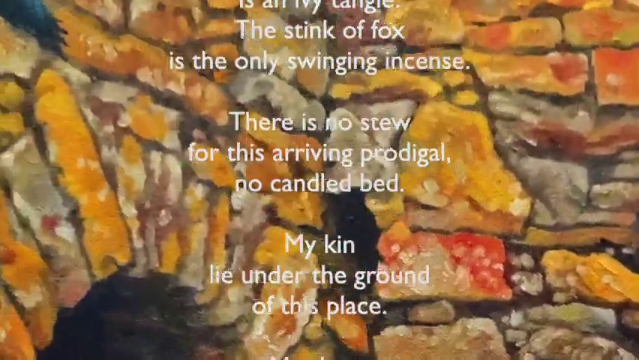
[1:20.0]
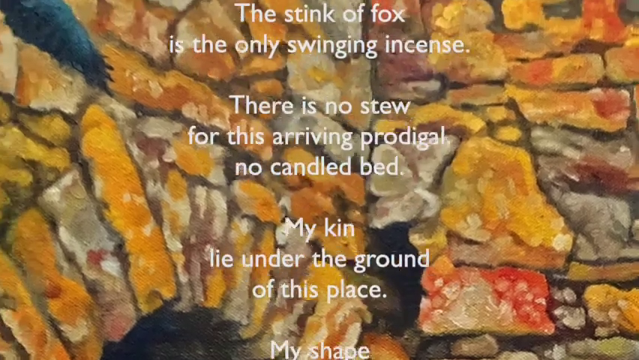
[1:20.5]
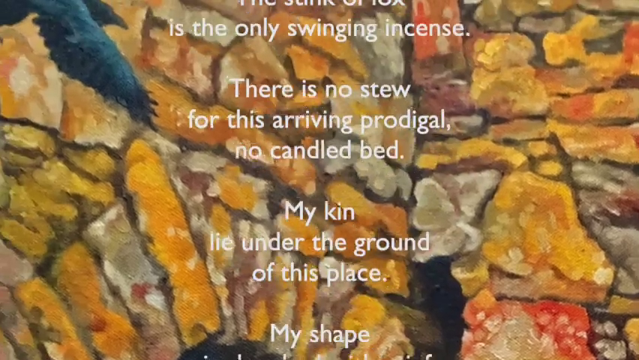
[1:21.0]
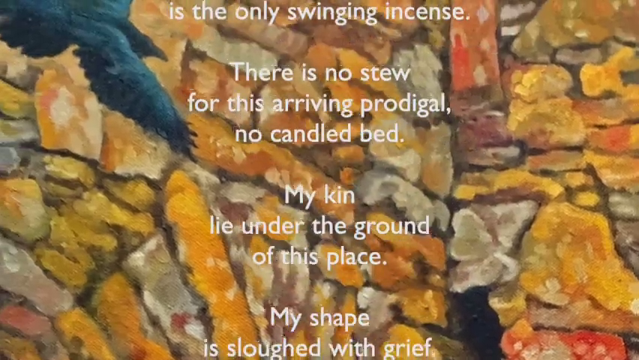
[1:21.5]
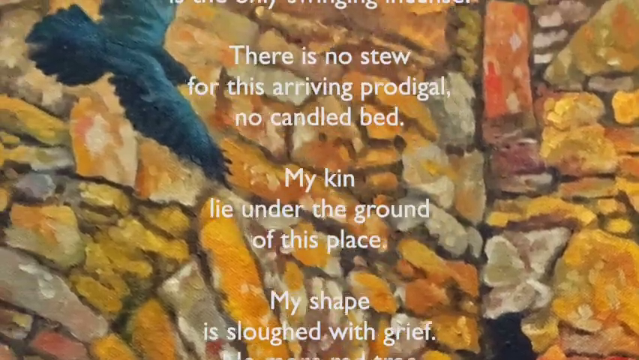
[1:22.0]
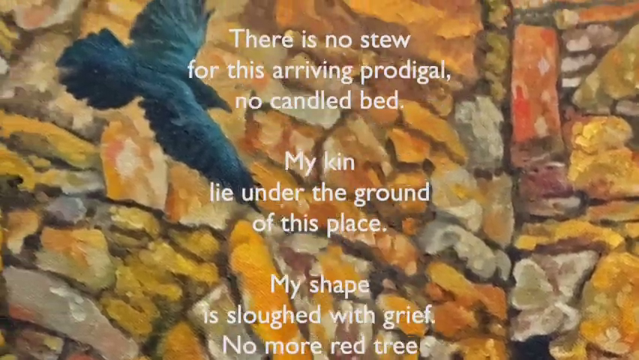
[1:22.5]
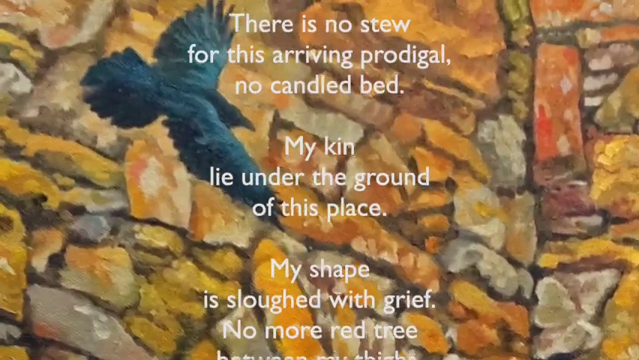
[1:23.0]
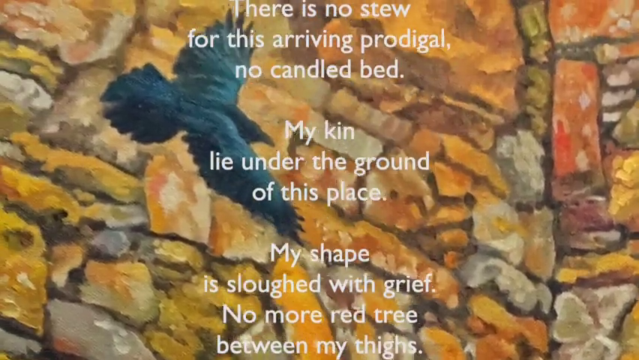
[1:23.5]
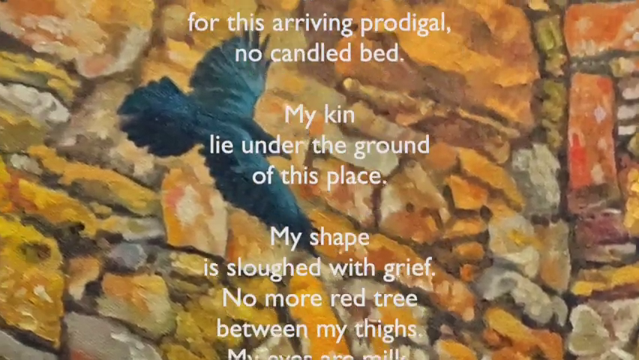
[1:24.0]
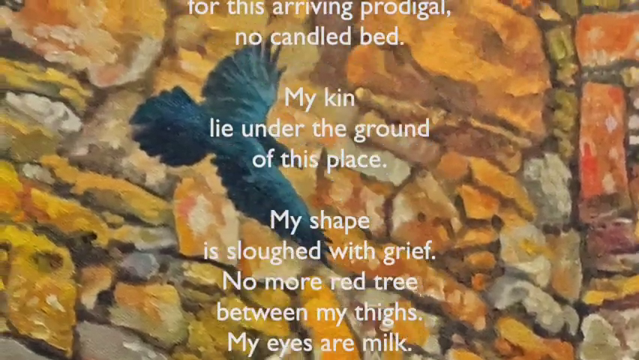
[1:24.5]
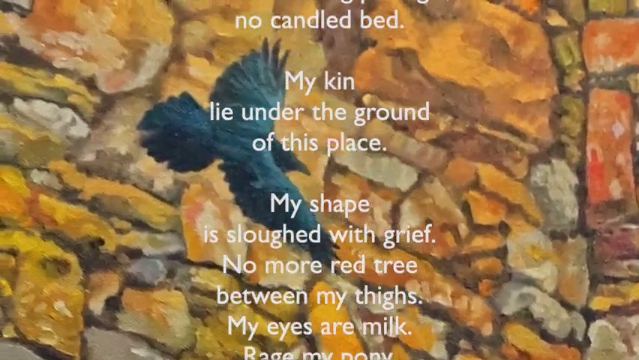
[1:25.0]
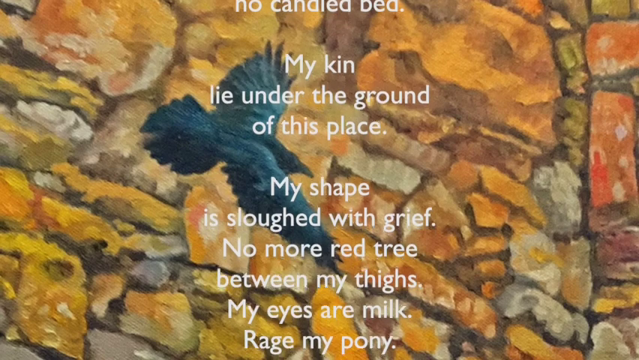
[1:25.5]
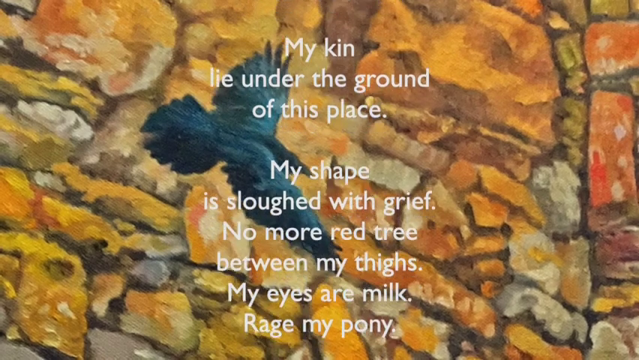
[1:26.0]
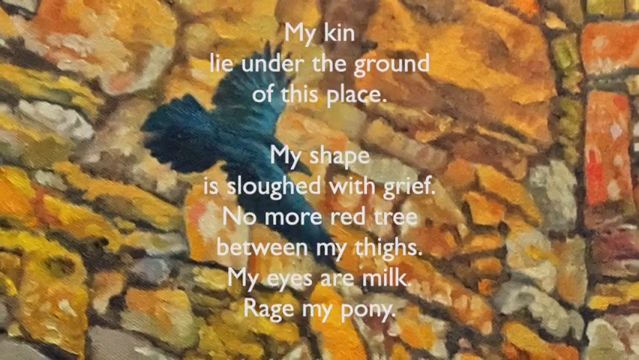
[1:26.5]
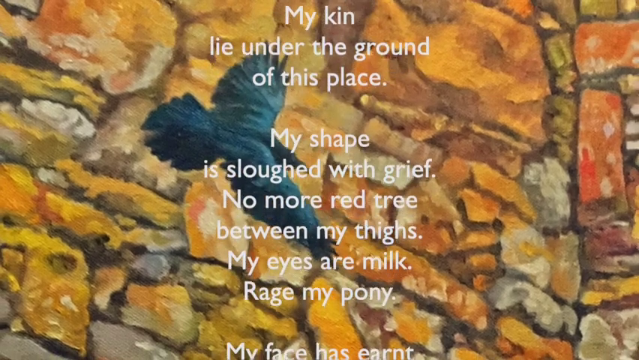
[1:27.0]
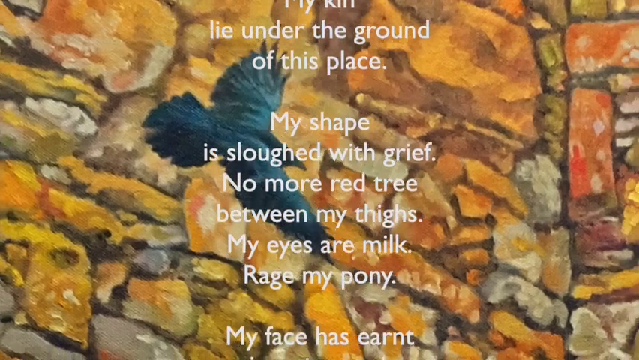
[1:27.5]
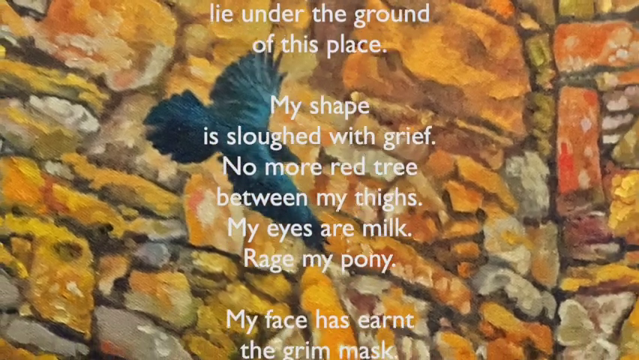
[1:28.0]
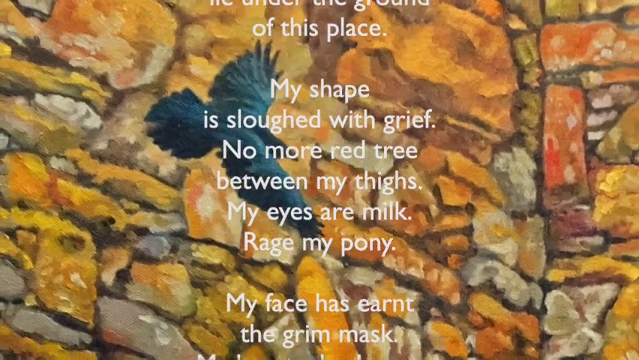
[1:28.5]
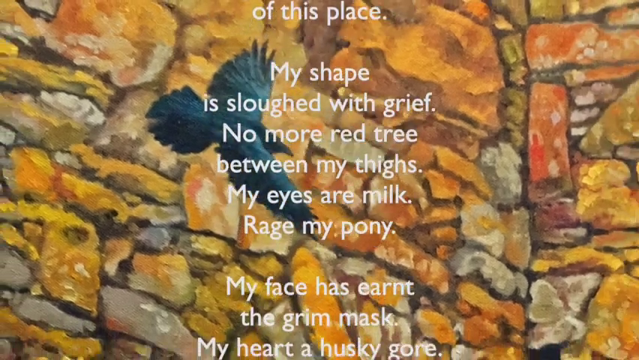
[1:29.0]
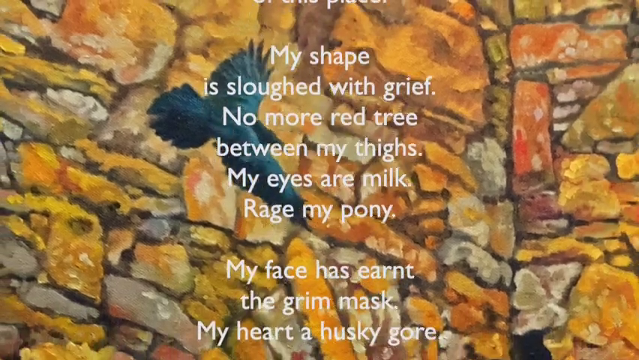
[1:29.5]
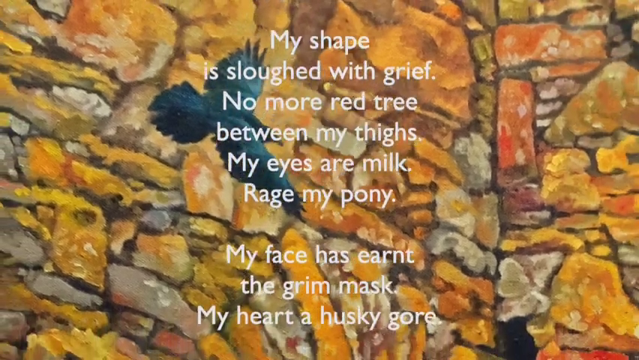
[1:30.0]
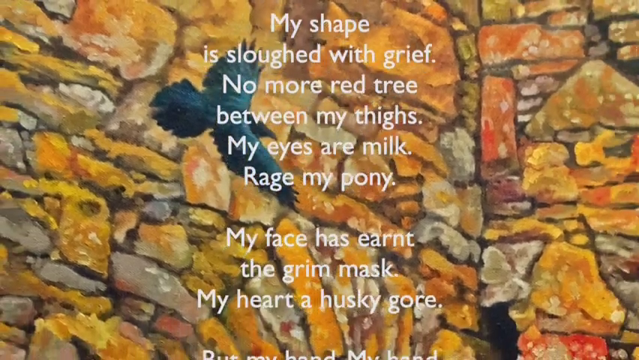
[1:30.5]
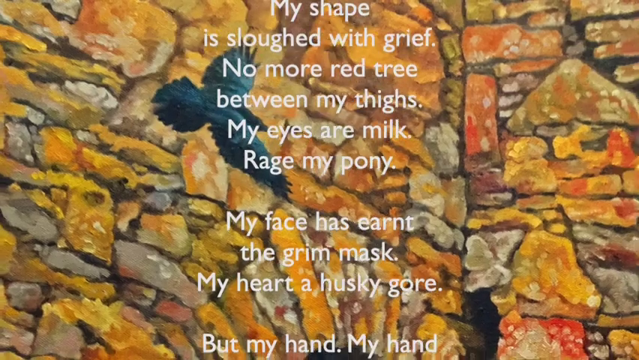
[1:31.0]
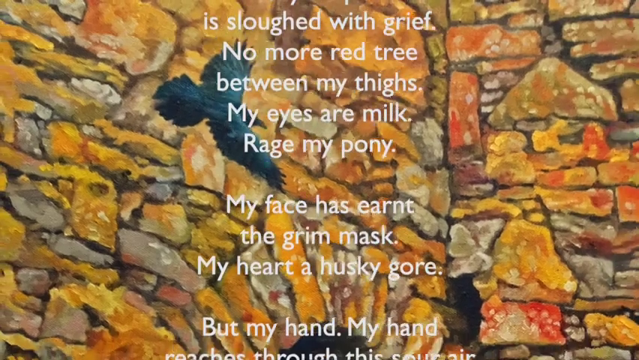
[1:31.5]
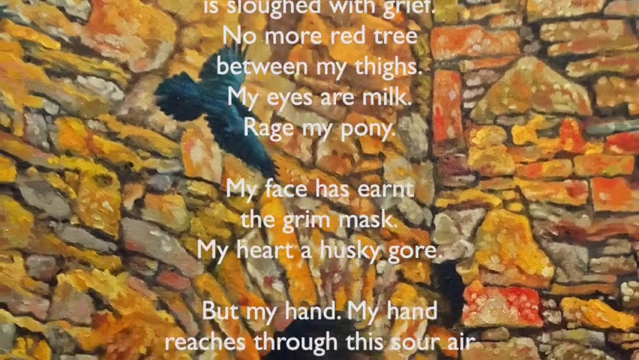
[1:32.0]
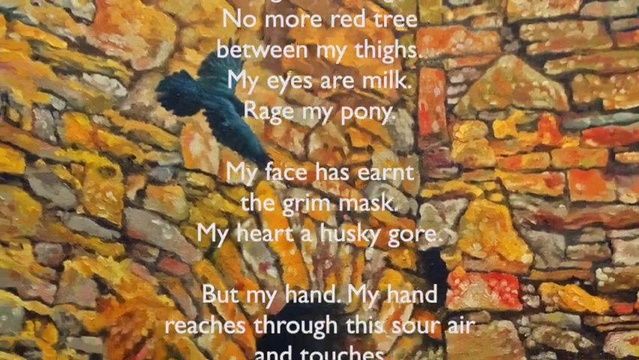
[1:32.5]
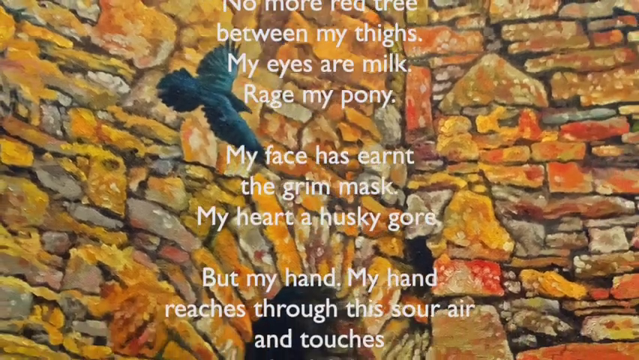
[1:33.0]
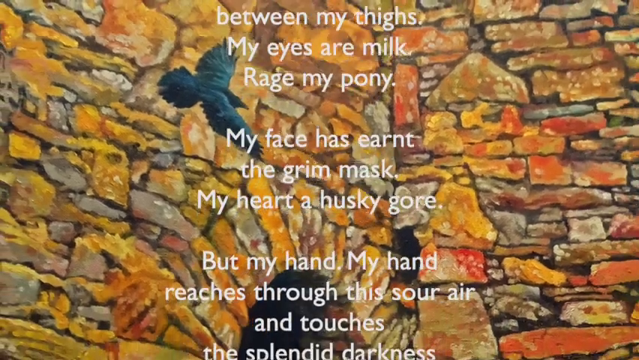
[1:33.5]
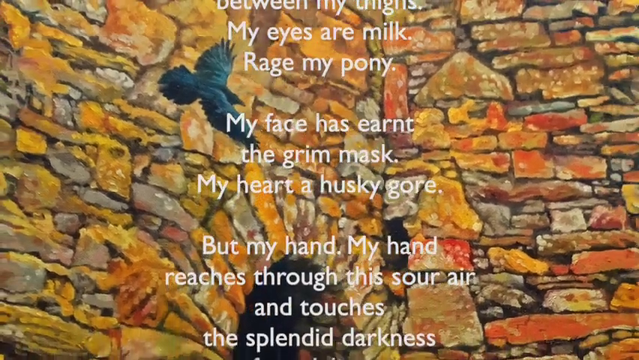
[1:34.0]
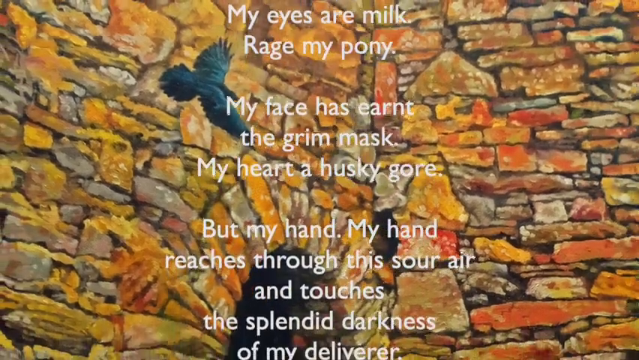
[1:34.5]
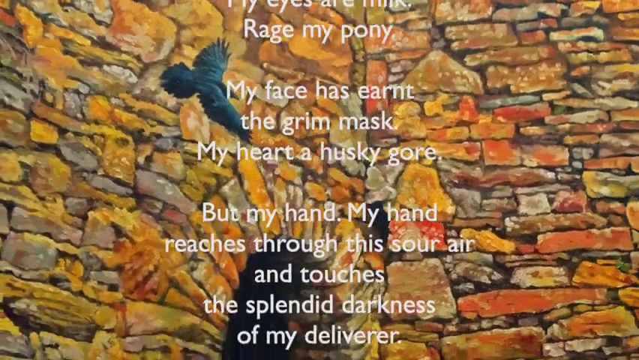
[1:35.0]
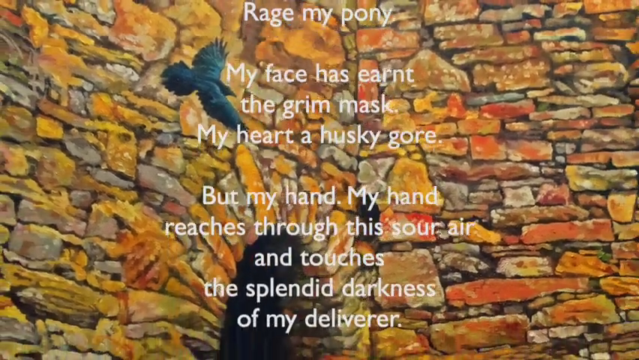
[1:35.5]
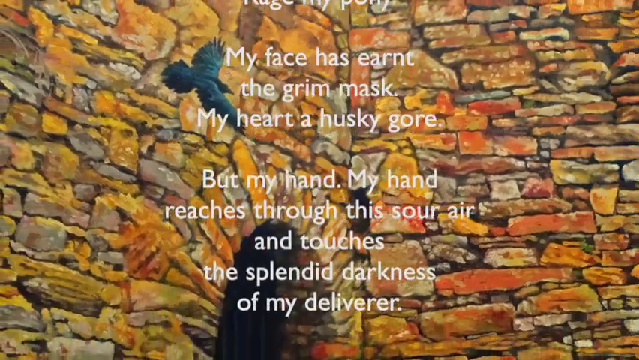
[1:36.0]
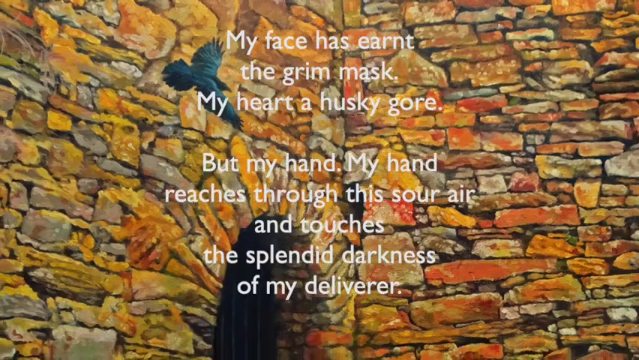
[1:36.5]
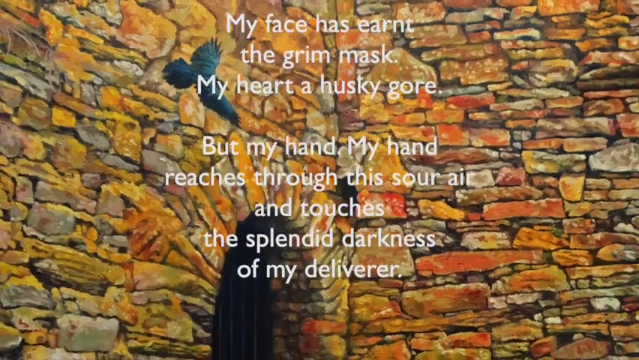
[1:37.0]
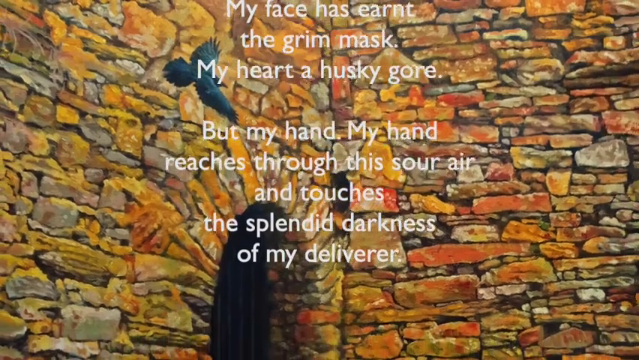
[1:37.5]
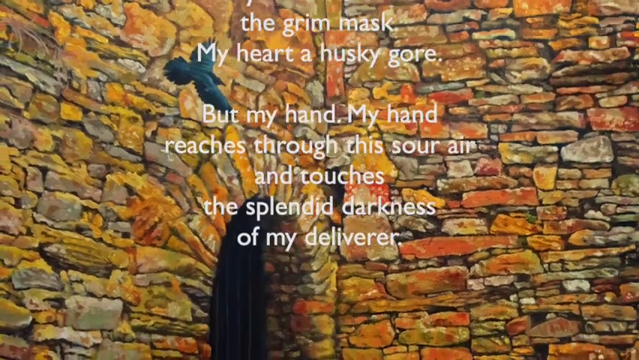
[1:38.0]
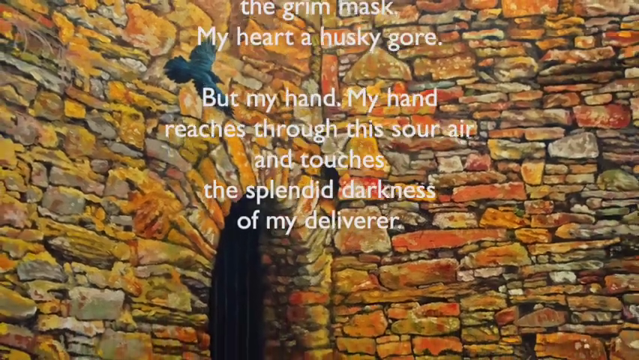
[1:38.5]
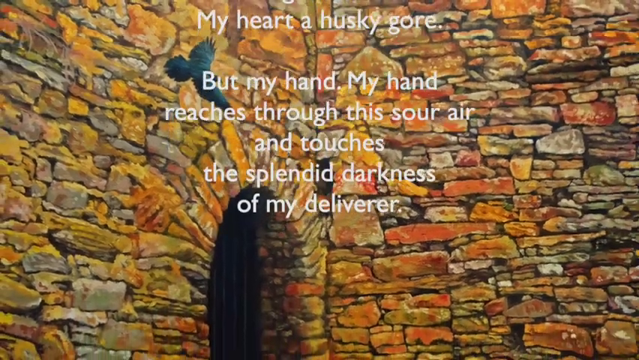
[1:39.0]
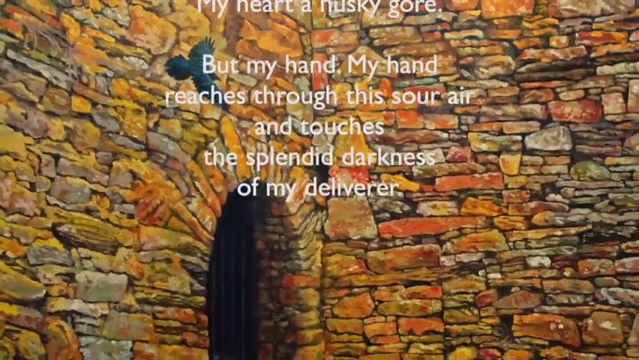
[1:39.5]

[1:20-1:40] The poem's white writing continues moving from bottom to top in the center of the screen, with the cobblestones in the background in yellow, white, gray and off-white, with brown and black lines between them. Part of the crow's feather is visible in the left-hand corner. It appears to be a painted picture. The text reads: "The stink of fox is the only swinging incense. There is no stew for this arriving prodigal. No candle bed. My kin lie under the ground of this place. My shape is slowed with grief. No more red tree between my thighs. My eyes are milk." It continues: "My face has earned the grim mass. My heart a husky gore. But my hand, my hand reaches through this sour air and touches the splendid darkness of my deliverer." The text scrolls upward, the poem appears to end, and the cobblestone backdrop is shown.